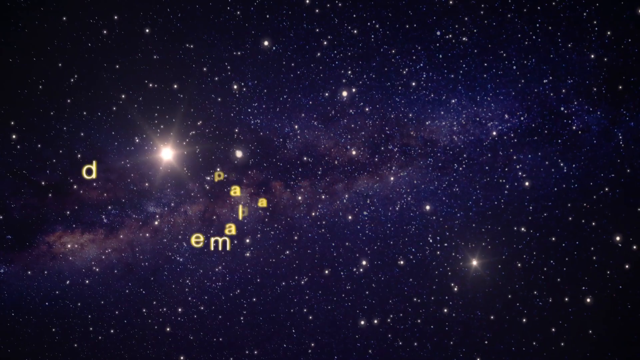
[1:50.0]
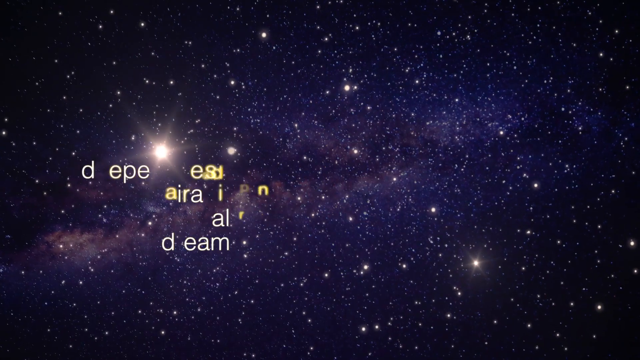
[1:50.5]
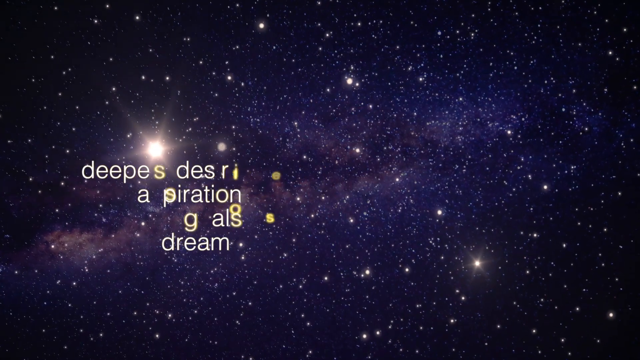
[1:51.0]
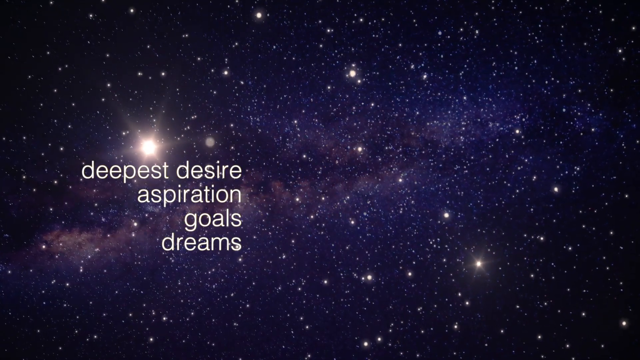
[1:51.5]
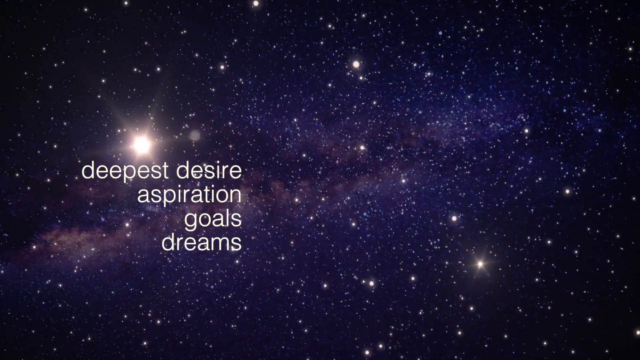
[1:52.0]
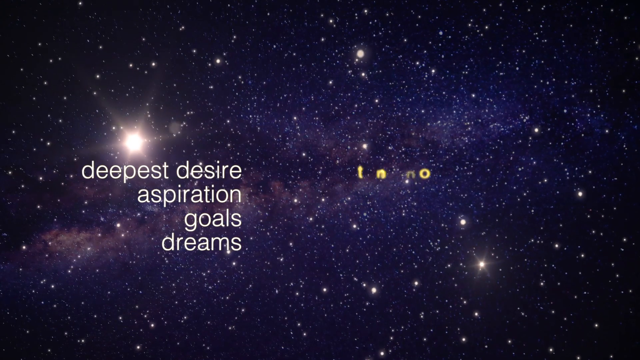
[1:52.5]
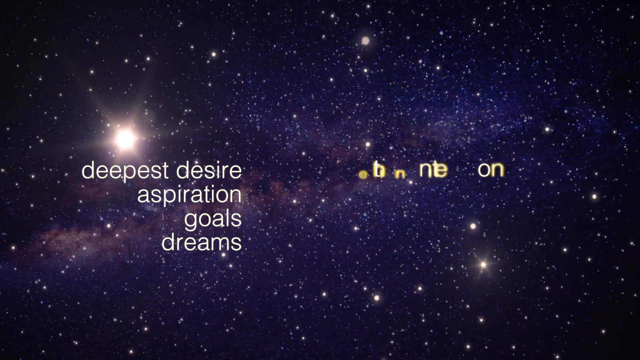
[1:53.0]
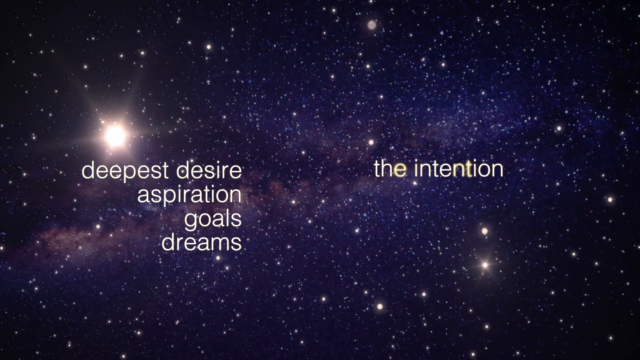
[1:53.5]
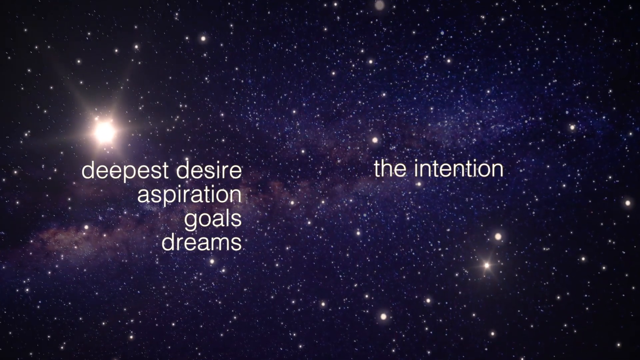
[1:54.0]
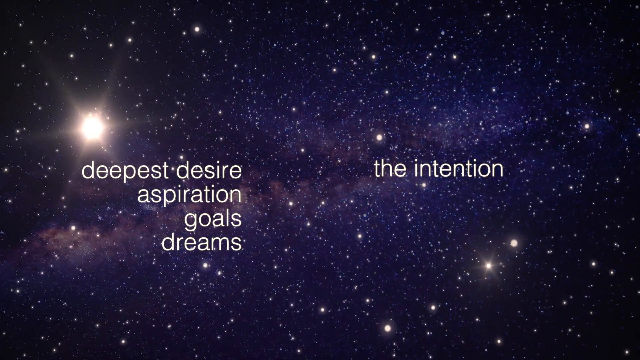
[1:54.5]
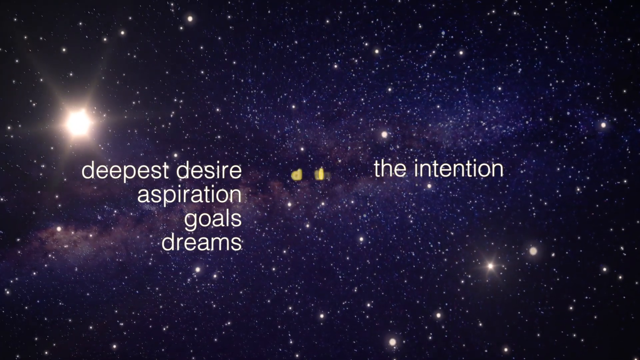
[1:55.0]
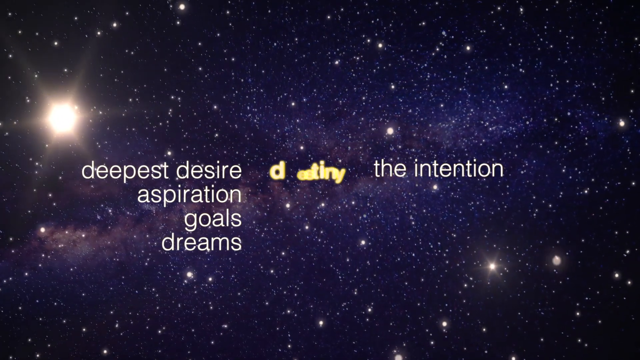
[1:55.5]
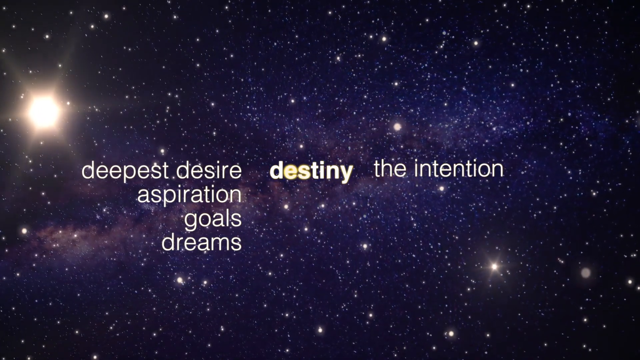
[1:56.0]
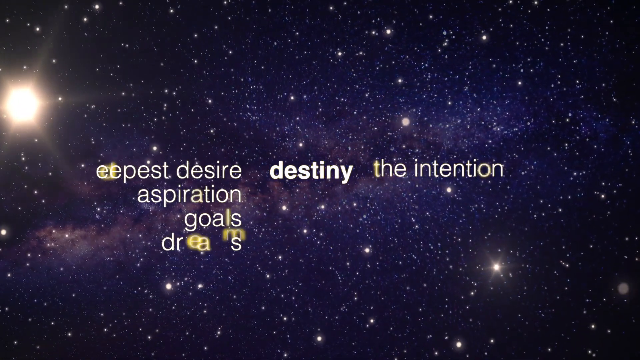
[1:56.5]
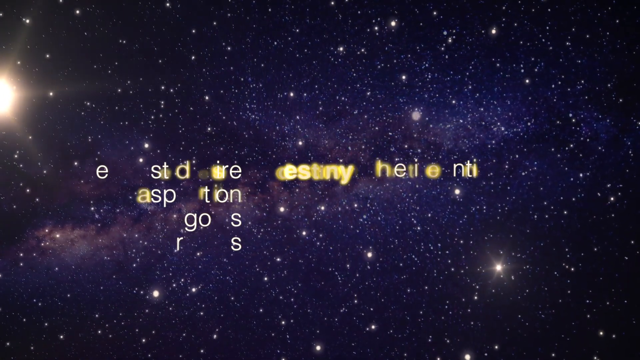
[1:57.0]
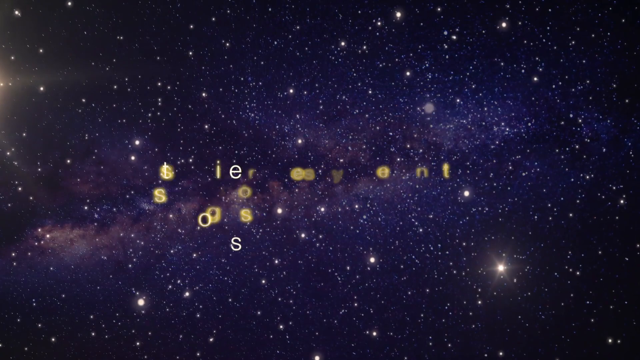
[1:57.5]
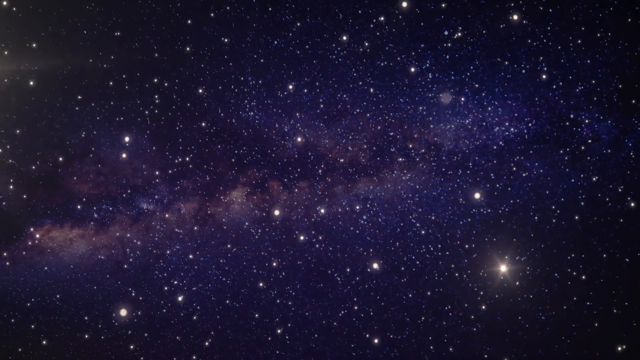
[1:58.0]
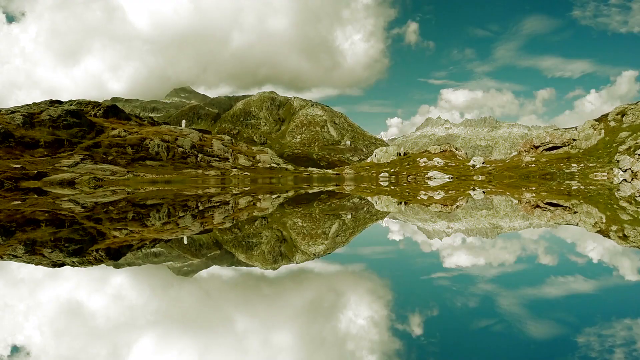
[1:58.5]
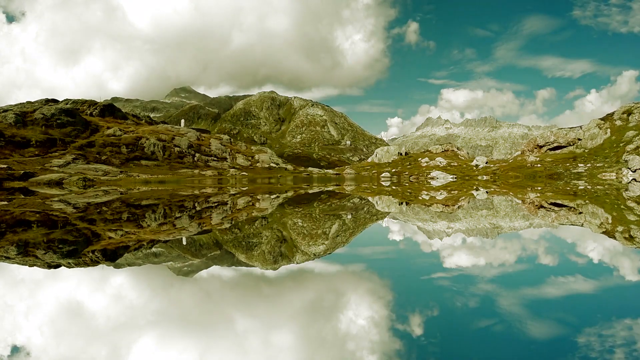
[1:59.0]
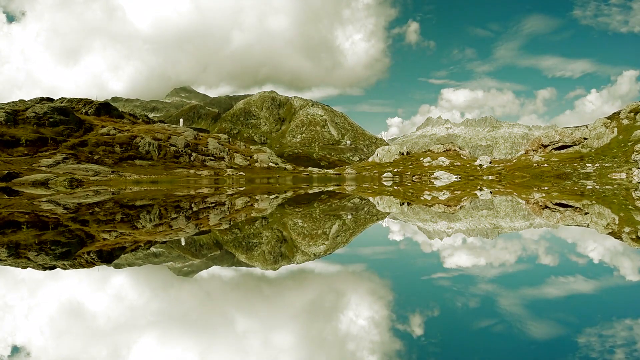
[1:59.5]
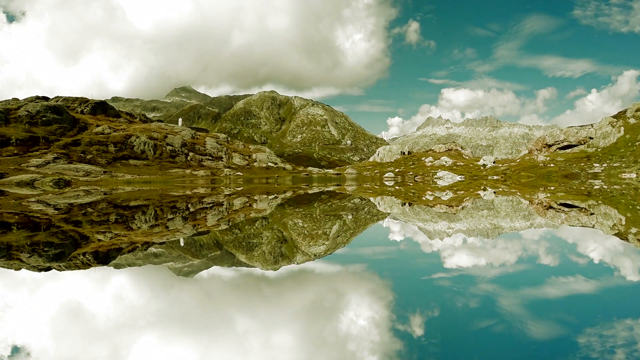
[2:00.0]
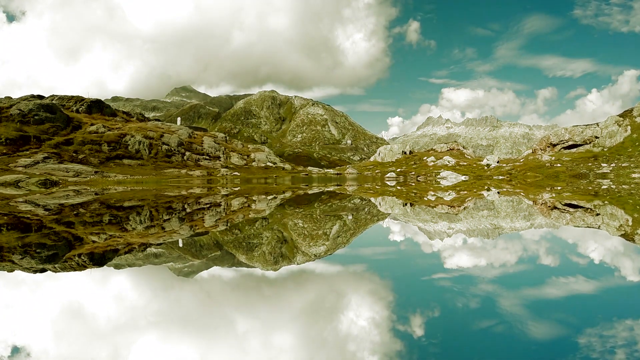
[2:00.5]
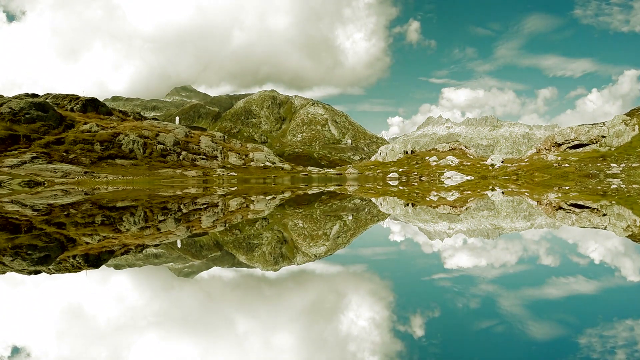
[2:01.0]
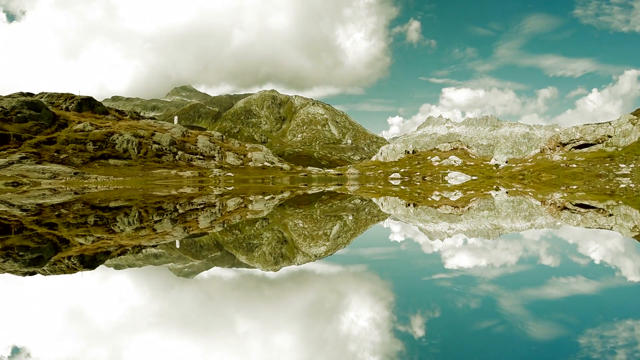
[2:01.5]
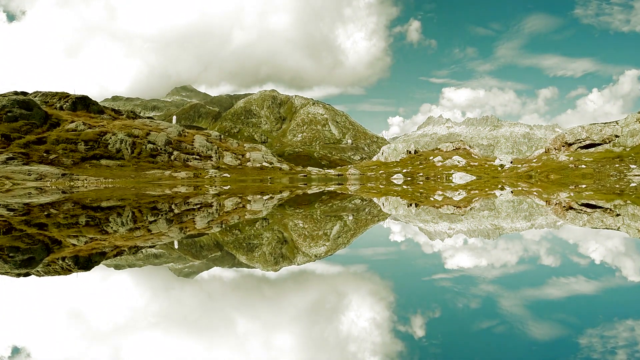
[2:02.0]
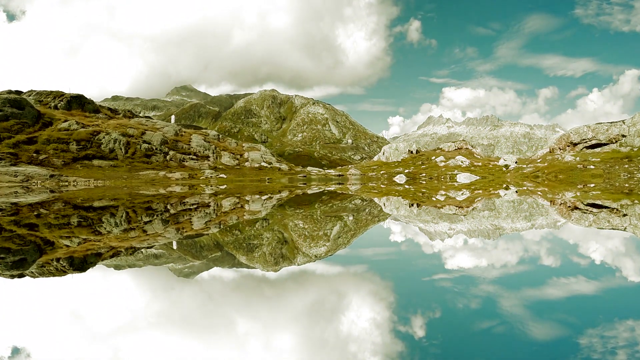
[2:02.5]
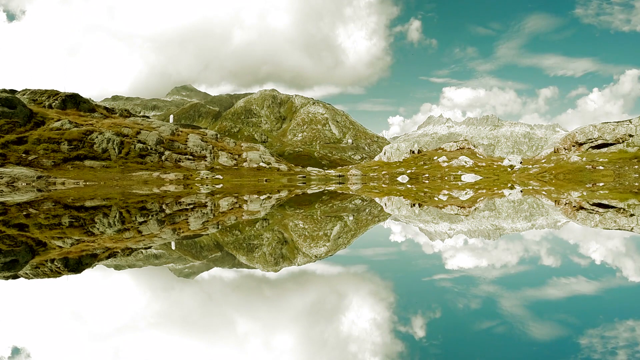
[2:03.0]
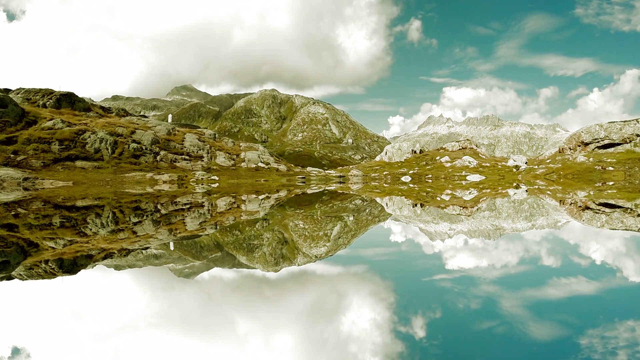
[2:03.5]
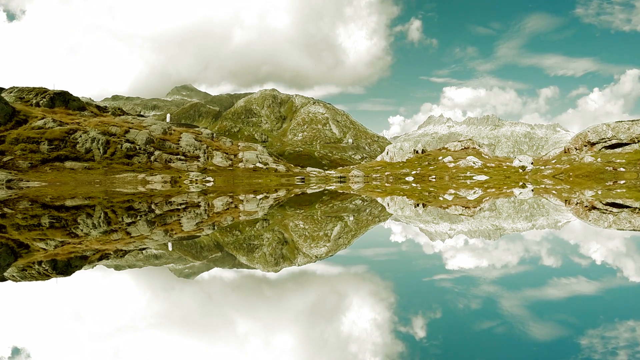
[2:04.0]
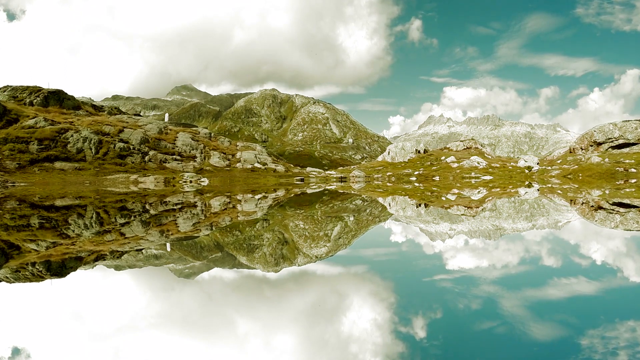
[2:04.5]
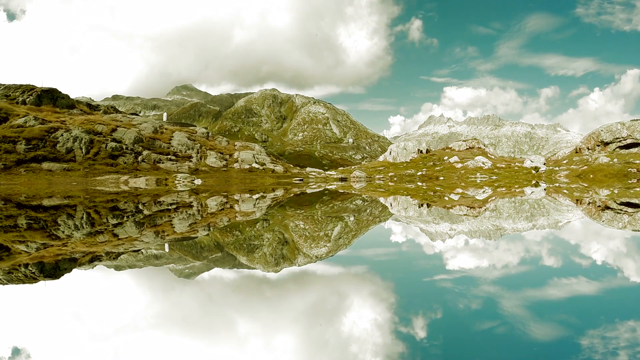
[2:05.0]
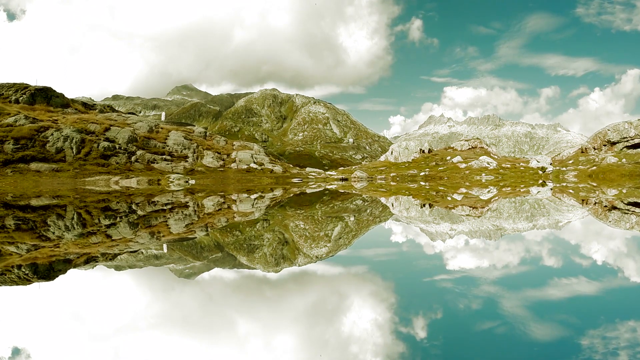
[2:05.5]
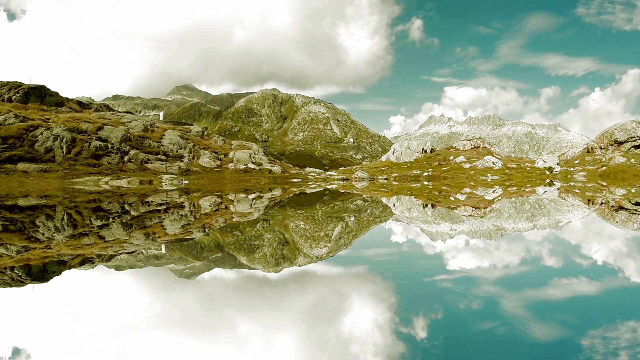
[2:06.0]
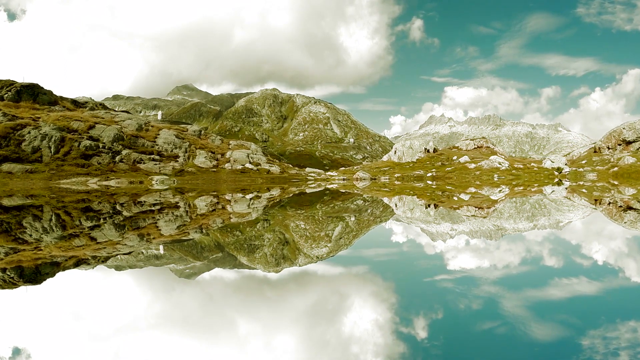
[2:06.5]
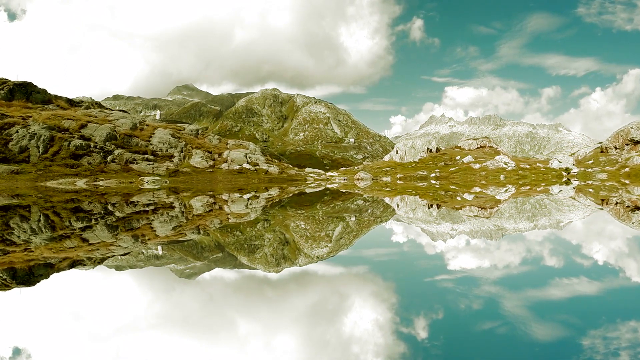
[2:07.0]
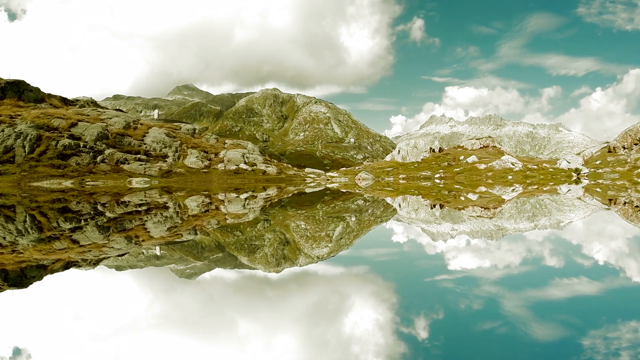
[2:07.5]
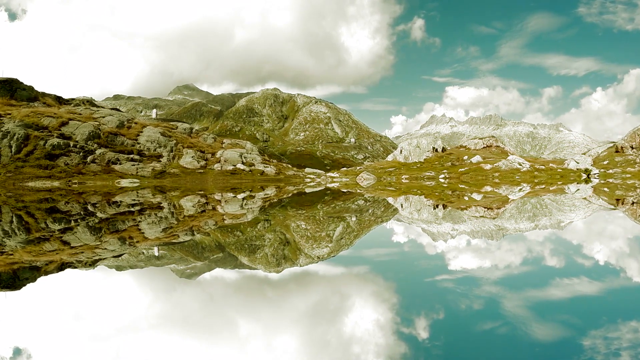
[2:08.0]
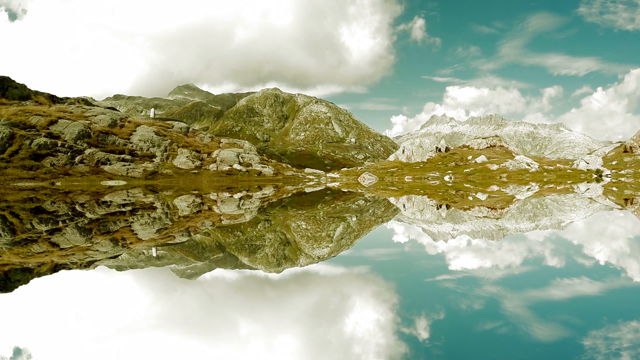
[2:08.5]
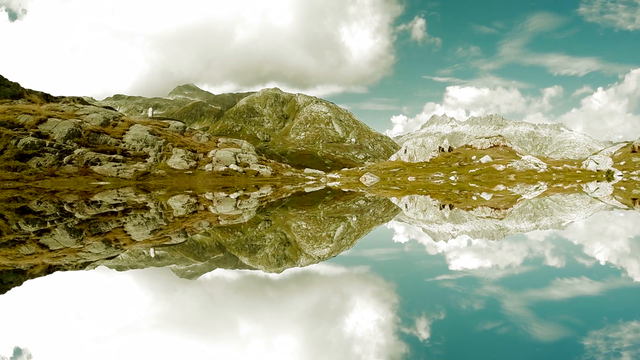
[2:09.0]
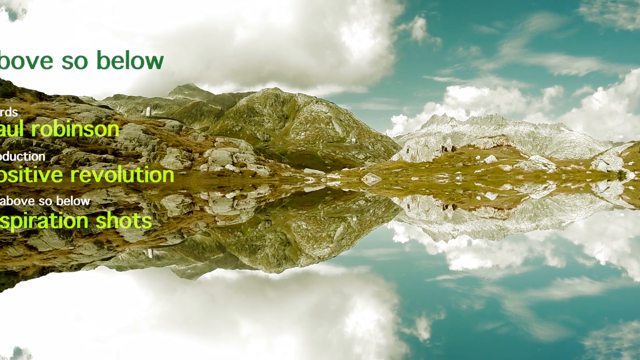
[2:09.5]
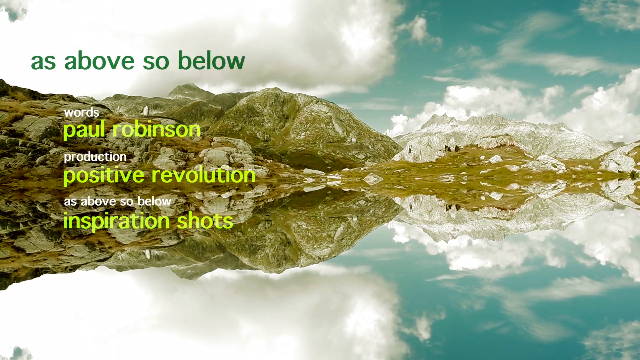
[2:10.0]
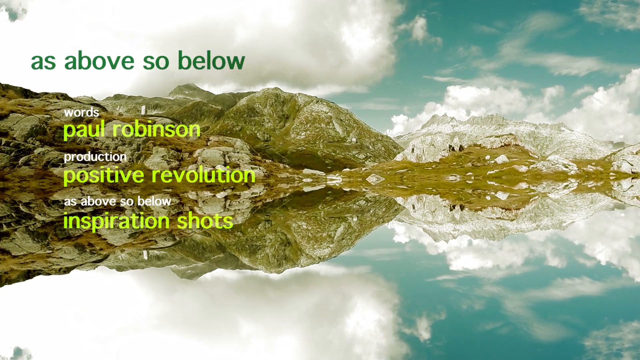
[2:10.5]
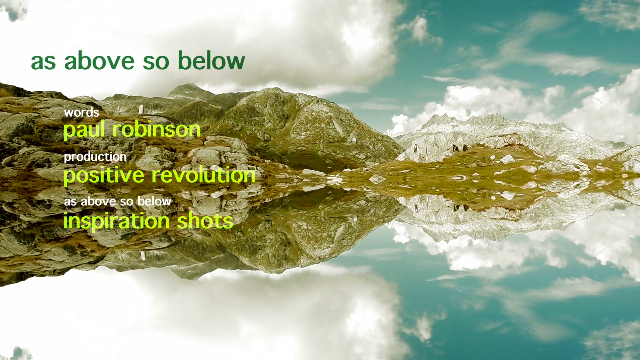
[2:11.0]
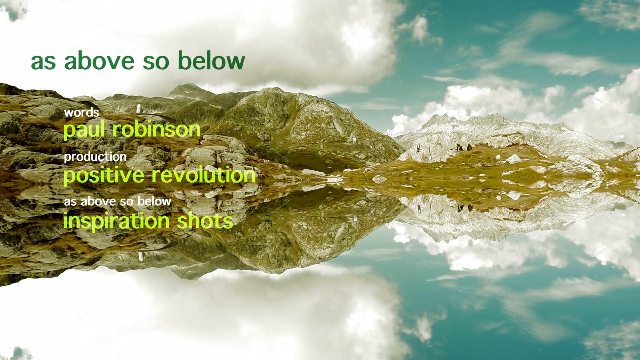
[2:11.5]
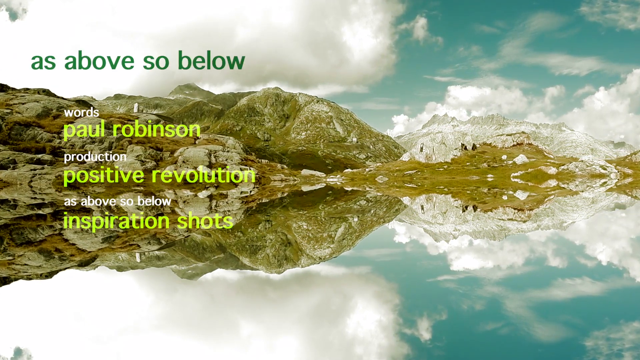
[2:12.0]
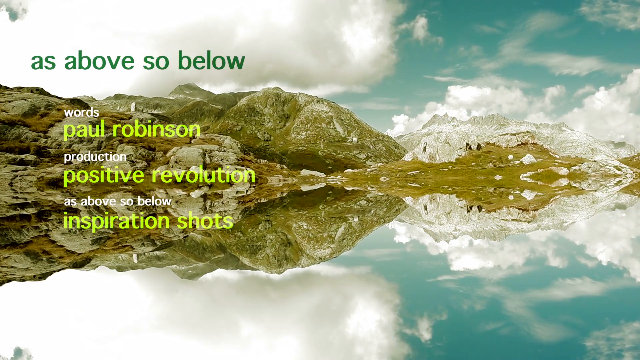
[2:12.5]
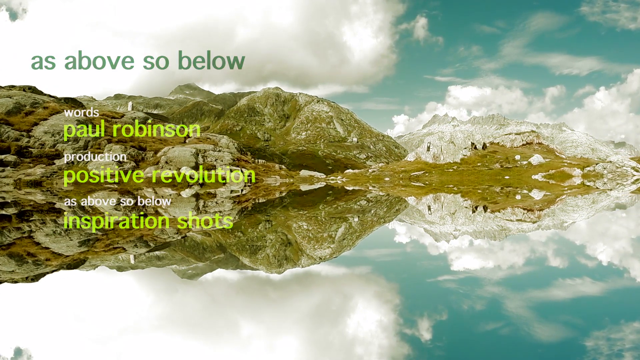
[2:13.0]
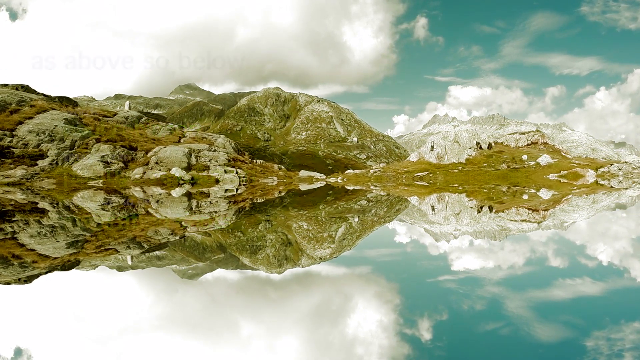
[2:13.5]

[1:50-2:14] The dark starry galaxy image with moving stars appears again. Words appear randomly on the screen in different places, first gold and then turning white as soon as they appear: "Deepest Desire," "Aspiration," "Goals," "Dreams," "Destiny" and "The Intention." The words turn gold again and then disappear. The scene changes to what seems to be a mirror-effect image of a river with a mountain or rocky side and a blue sky with a lot of cloud cover, moving slowly towards the camera. The words "As above, so below." appear on the screen. Next comes something like a cast list: it says "words" with the name "Paul Robertson" underneath, then "production" with "Positive Revolution" underneath, then "As above, so below" with "Inspiration Shots" under it.